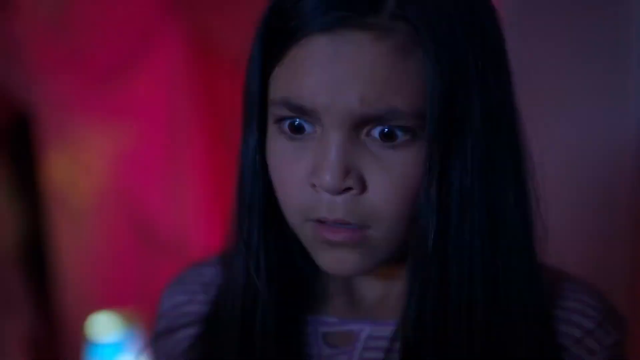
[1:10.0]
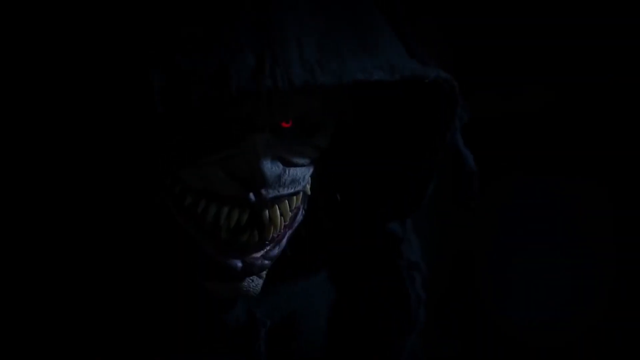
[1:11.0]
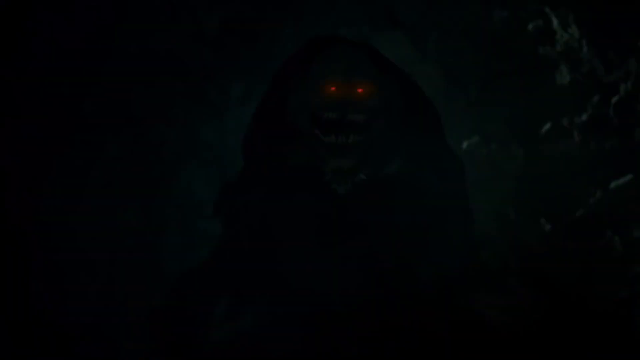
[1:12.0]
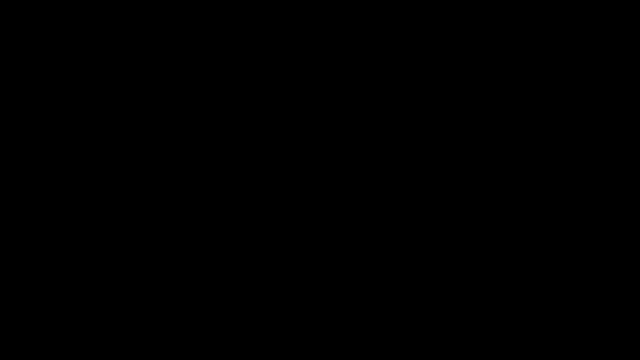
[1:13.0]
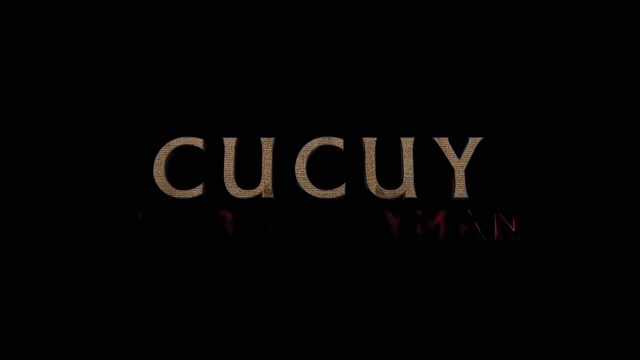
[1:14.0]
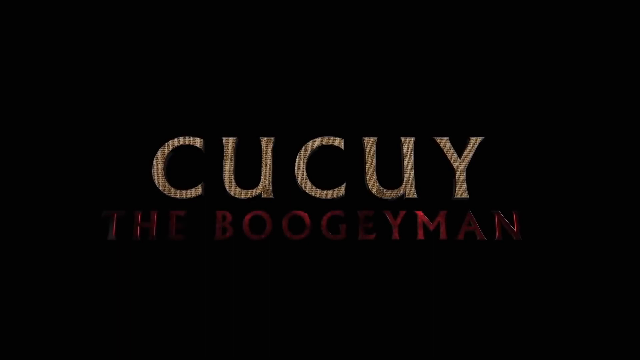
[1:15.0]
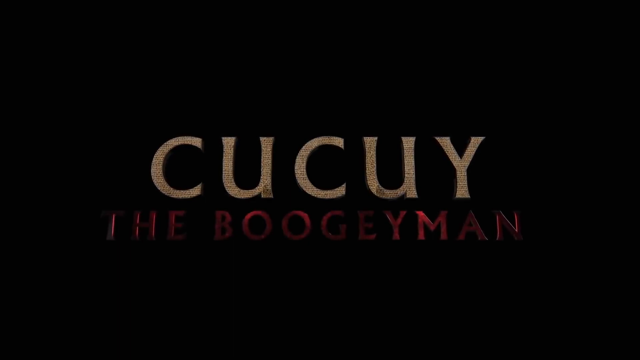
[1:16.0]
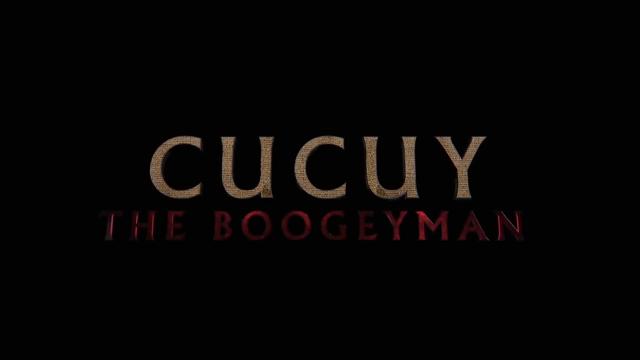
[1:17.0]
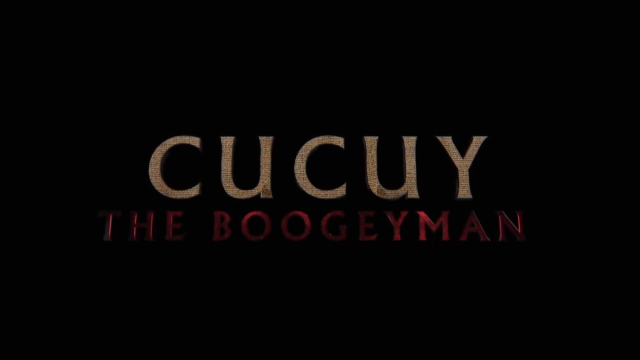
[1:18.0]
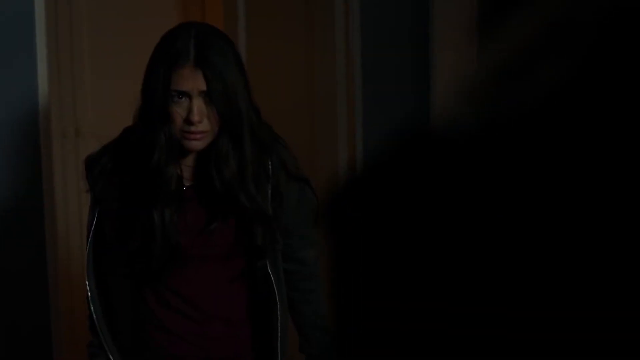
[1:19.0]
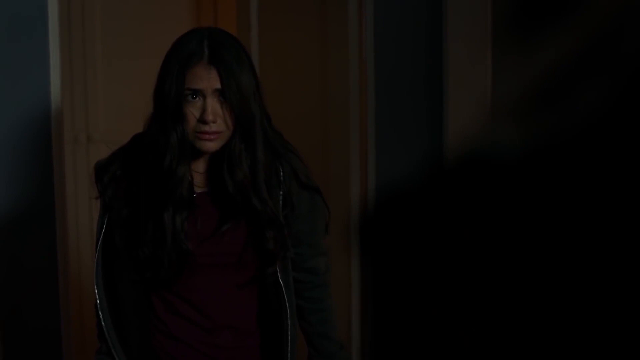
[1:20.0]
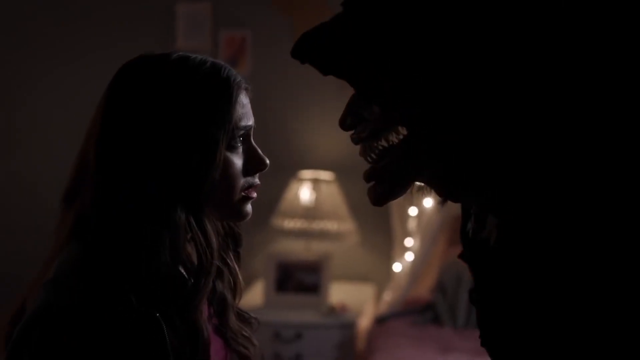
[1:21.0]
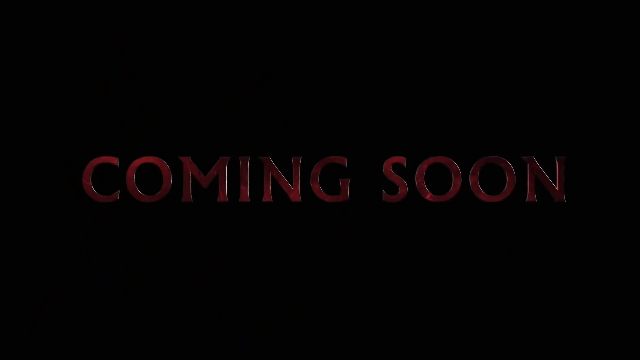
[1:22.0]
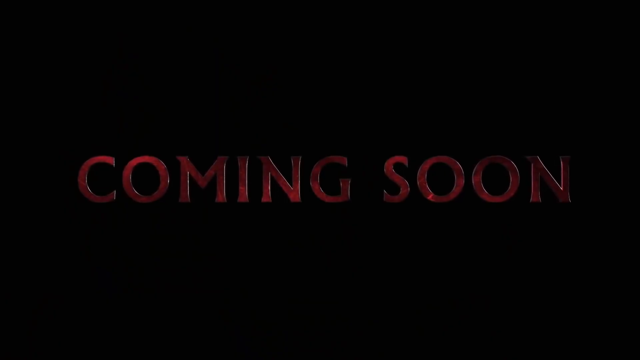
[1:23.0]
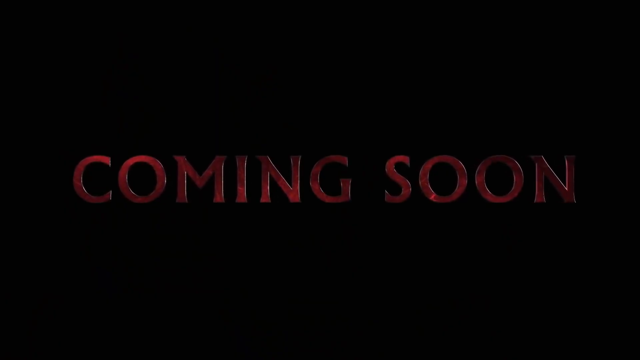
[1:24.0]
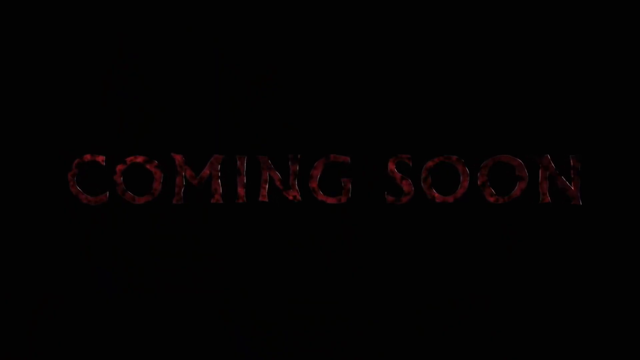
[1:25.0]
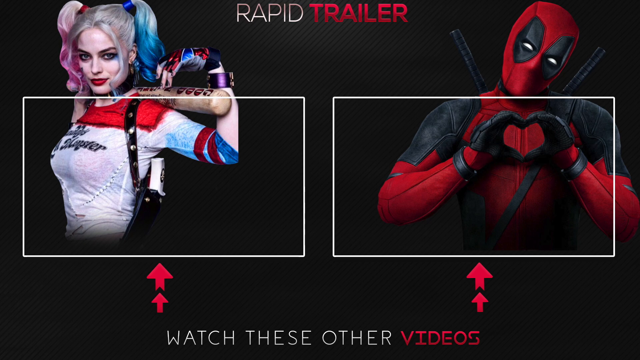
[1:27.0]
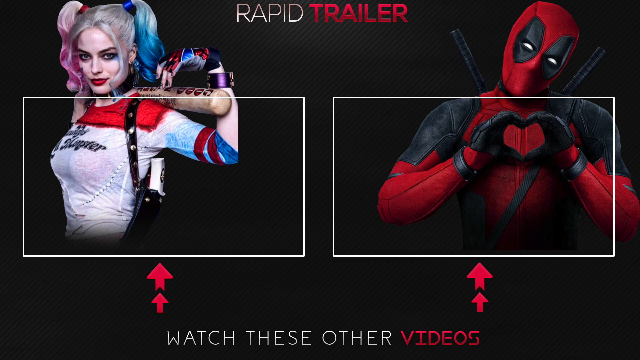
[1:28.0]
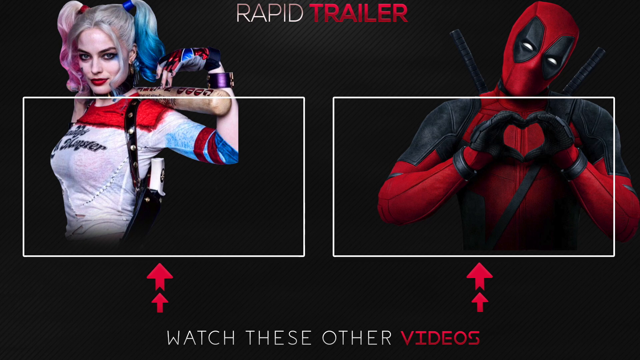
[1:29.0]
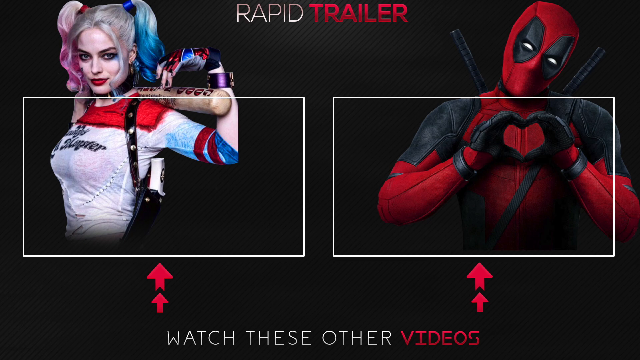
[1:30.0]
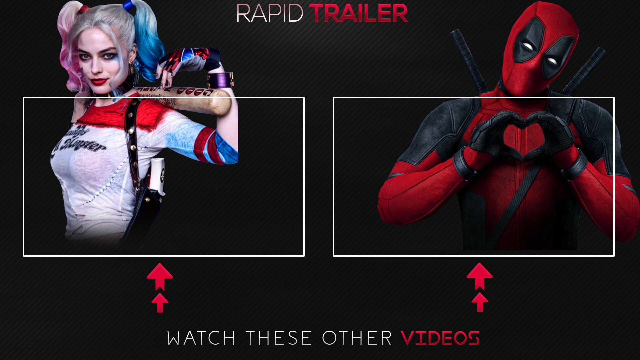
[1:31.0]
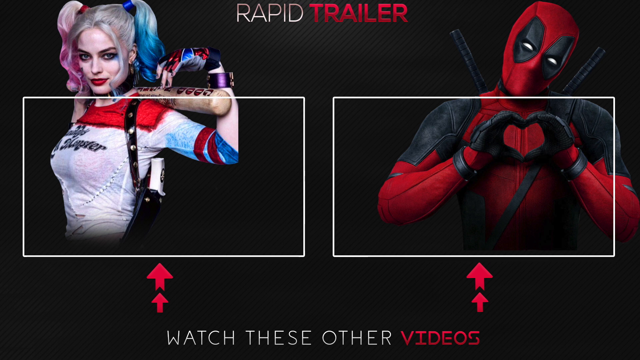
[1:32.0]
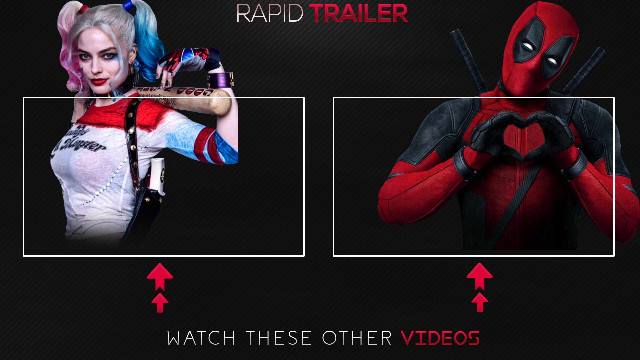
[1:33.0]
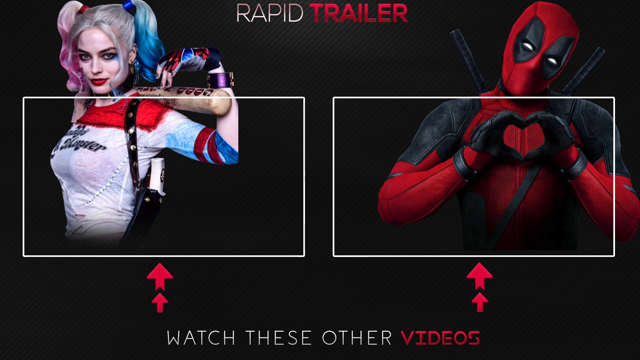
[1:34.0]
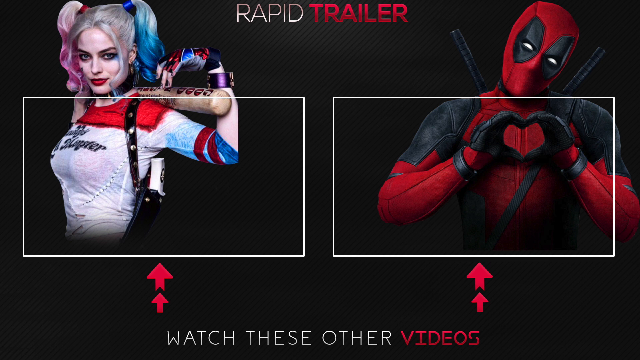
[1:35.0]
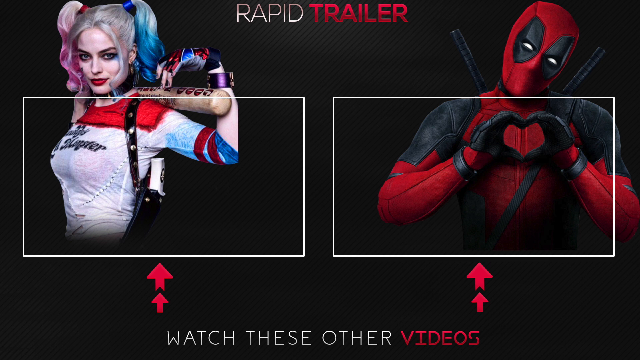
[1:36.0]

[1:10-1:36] A scary figure with gray skin on its face, lots of sharp teeth protruding from its mouth and glowing red eyes stands face to face with a woman wearing a jacket, who looks up at it with her eyes wide open in fear. The view switches to the figure, which opens its mouth, screaming as the screen flashes. On a black background, beige text appears that says "Kukui", with red text underneath that says "the Boogeyman". A woman in a dark hoodie and maroon T-shirt is inside a house, face to face with the figure in the dark hood, which leans its face down closer to her, exposing its sharp teeth. Red text that says "coming soon" appears on a black background. The text fades away, changing to a textured black background with "Rapid" in white and "Trailer" in red at the top. A woman character on the left side of the screen, wearing a red, white and blue shirt, holds a baseball bat across her shoulder behind her back. A red and black character on the right side holds his hands up to his chest, forming a heart with both hands. This stays on screen for the remainder of the video.